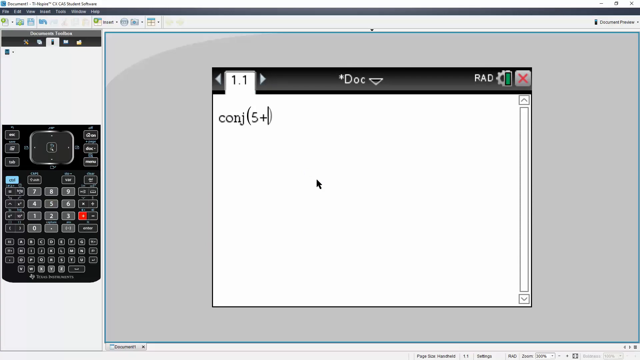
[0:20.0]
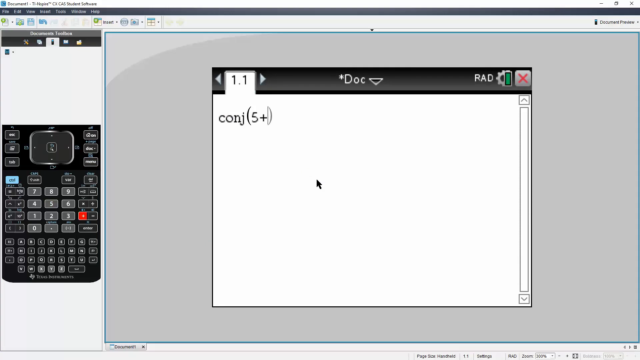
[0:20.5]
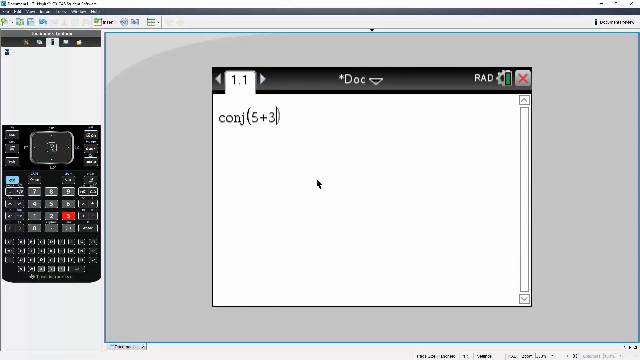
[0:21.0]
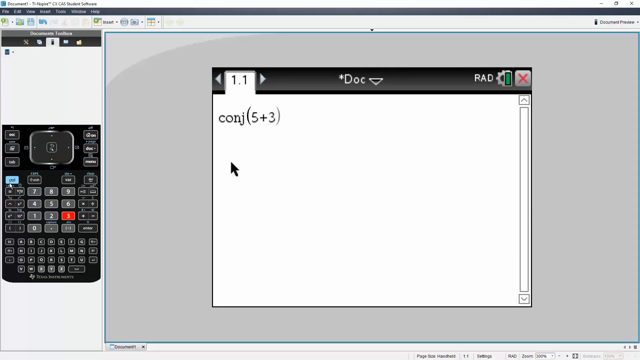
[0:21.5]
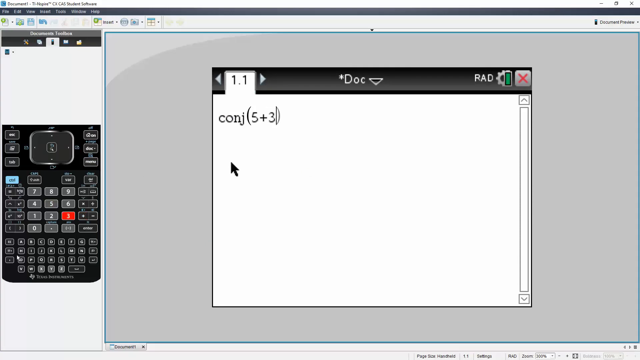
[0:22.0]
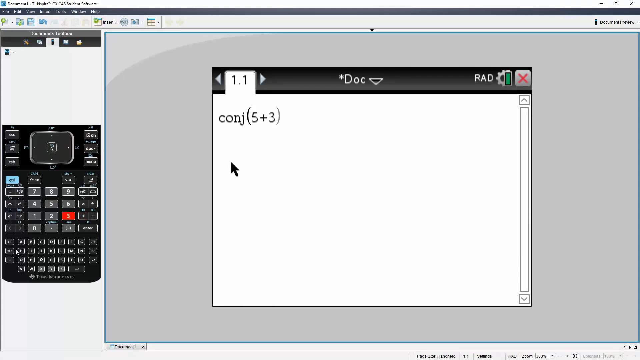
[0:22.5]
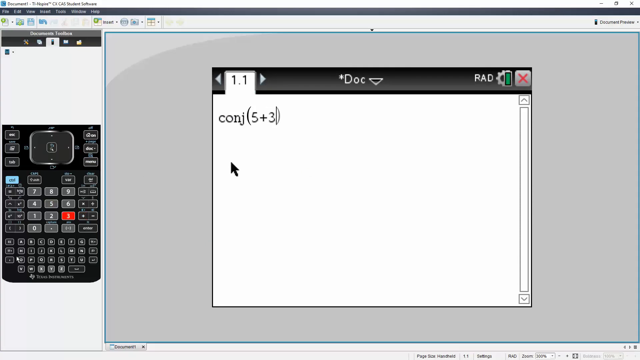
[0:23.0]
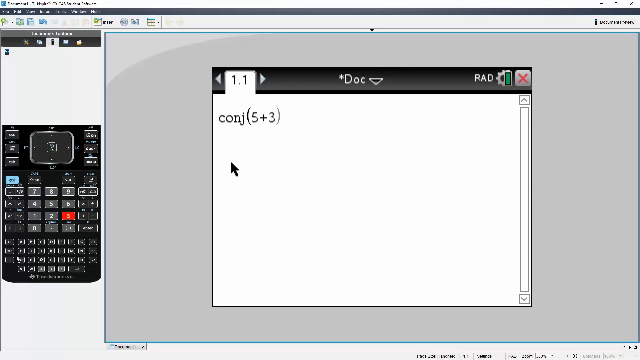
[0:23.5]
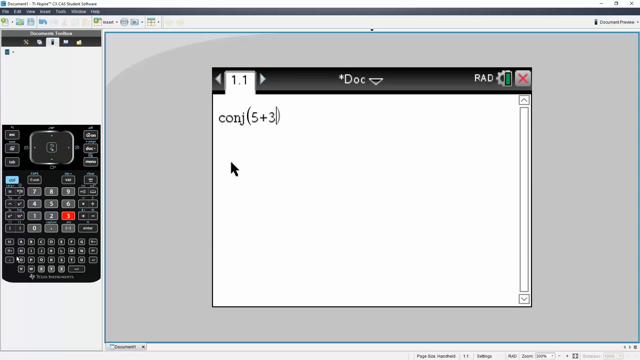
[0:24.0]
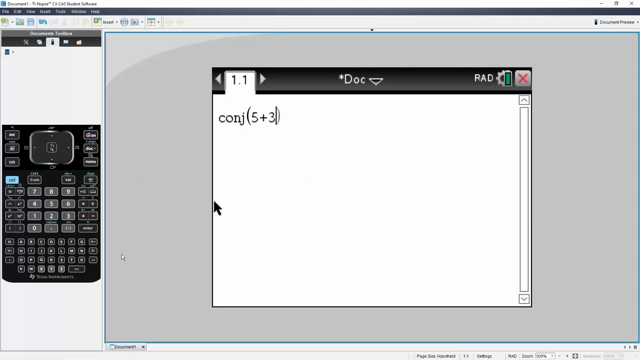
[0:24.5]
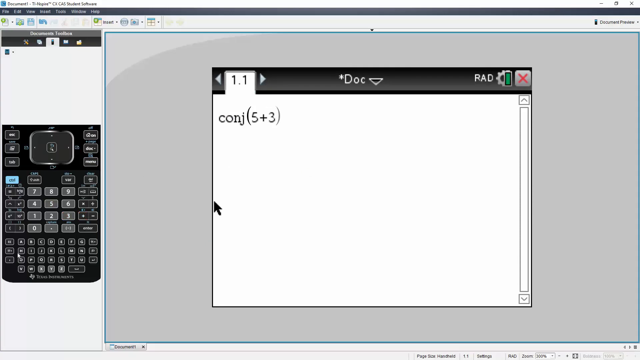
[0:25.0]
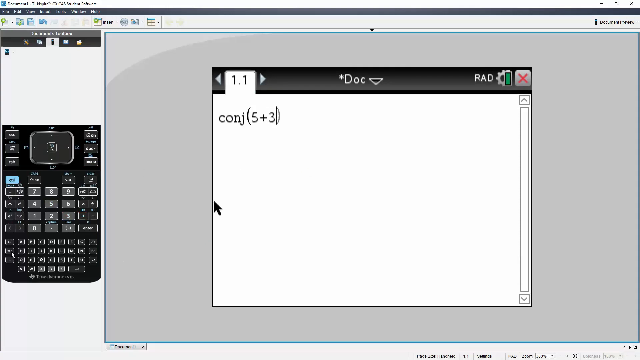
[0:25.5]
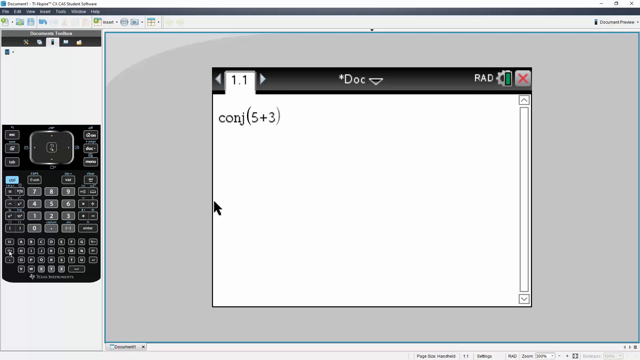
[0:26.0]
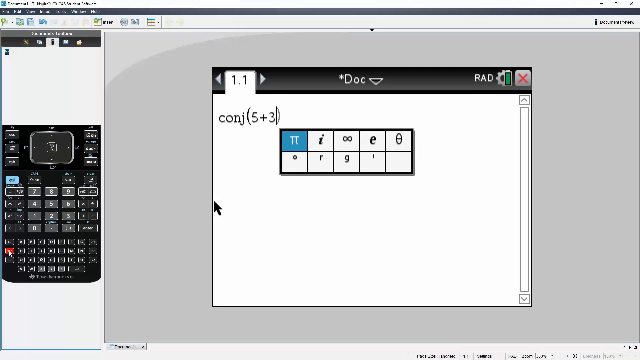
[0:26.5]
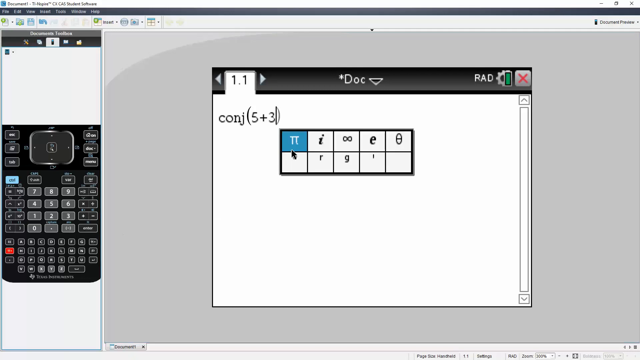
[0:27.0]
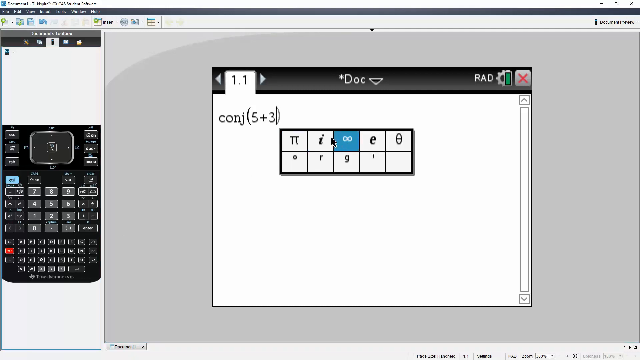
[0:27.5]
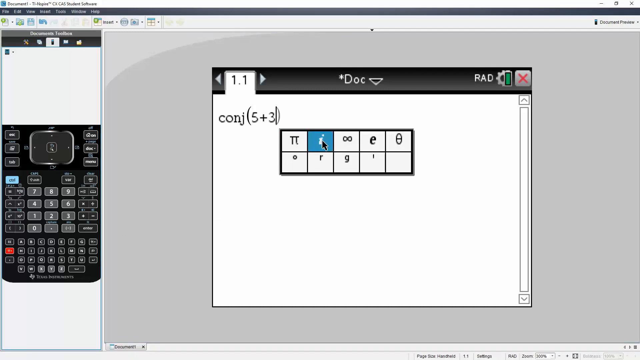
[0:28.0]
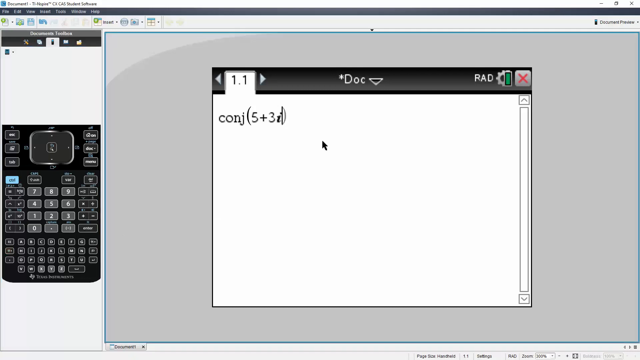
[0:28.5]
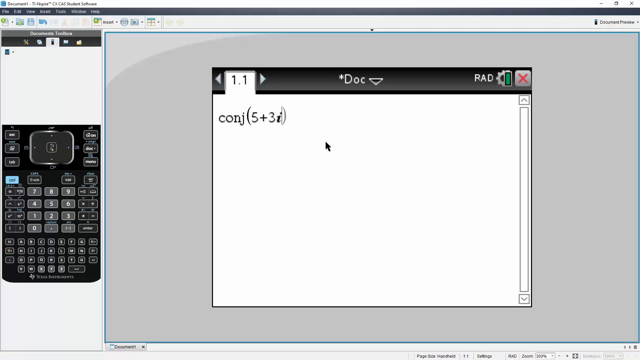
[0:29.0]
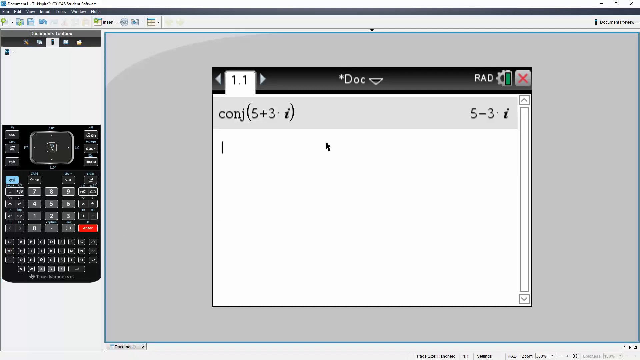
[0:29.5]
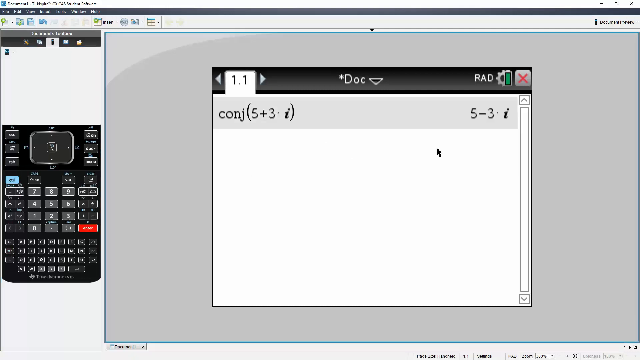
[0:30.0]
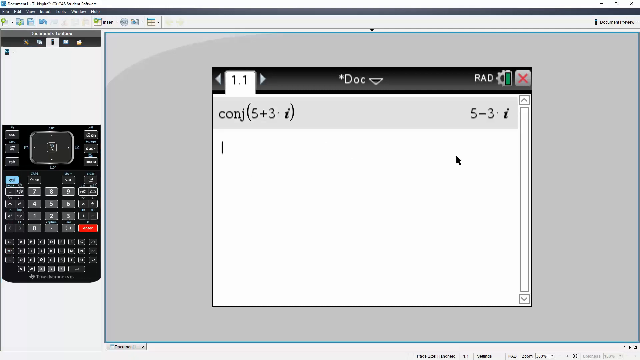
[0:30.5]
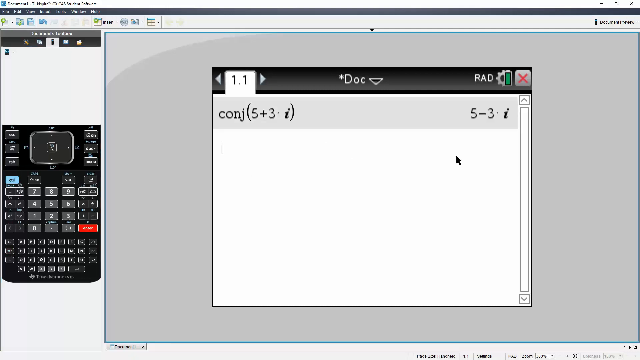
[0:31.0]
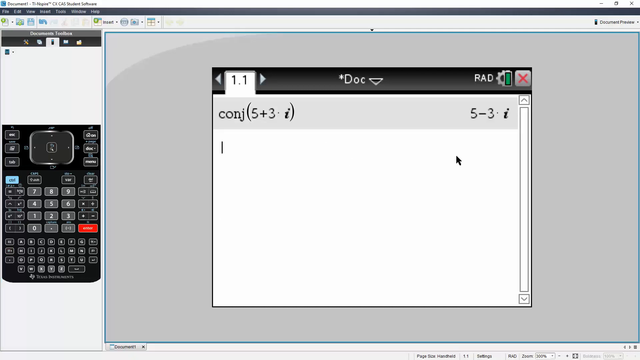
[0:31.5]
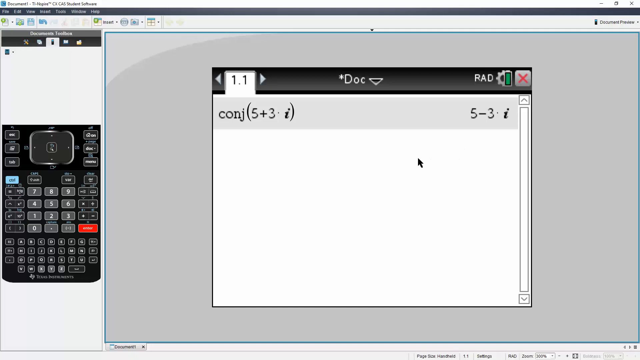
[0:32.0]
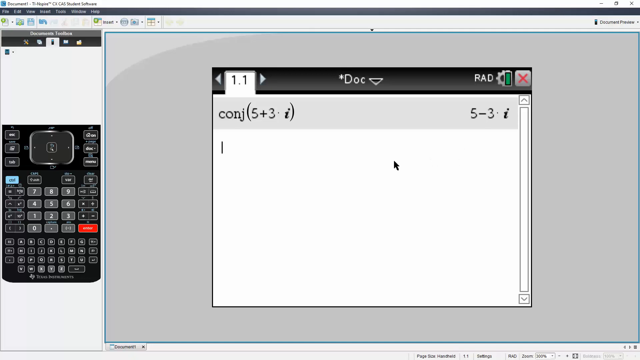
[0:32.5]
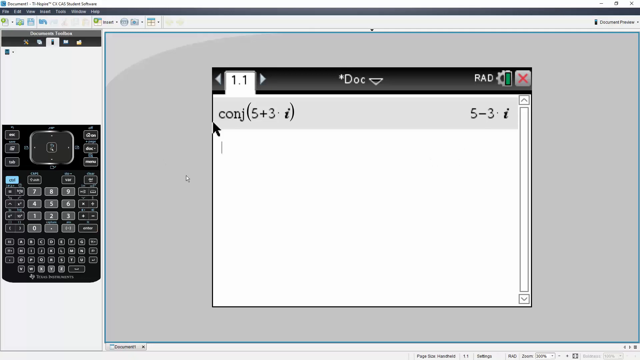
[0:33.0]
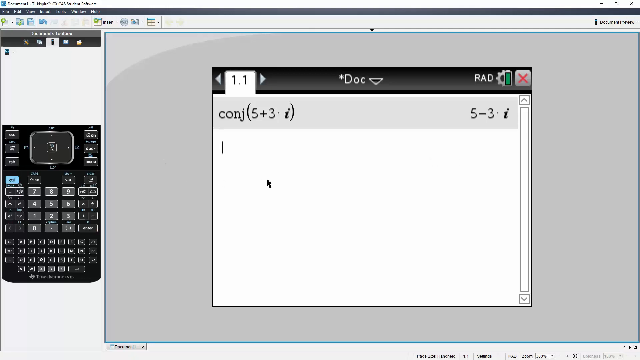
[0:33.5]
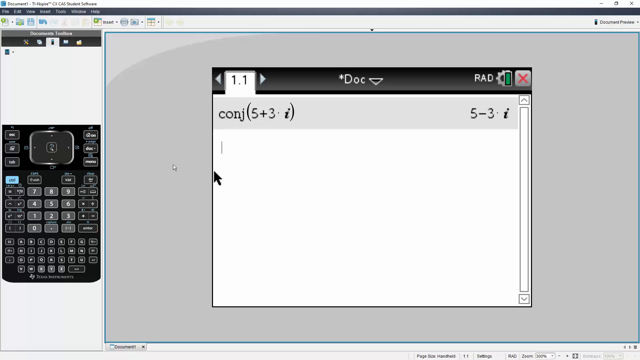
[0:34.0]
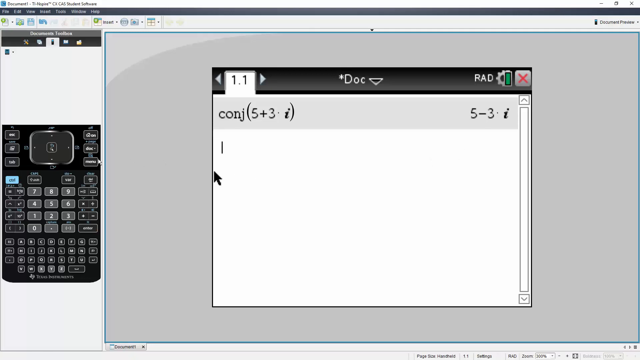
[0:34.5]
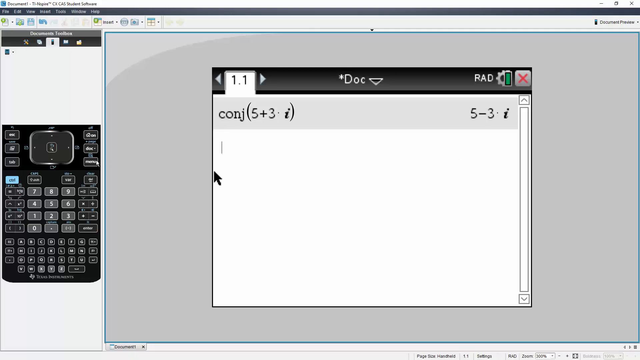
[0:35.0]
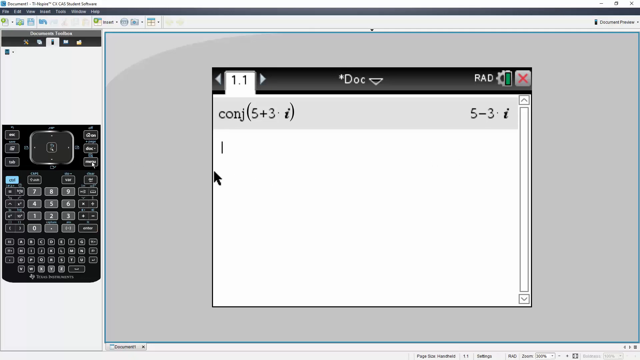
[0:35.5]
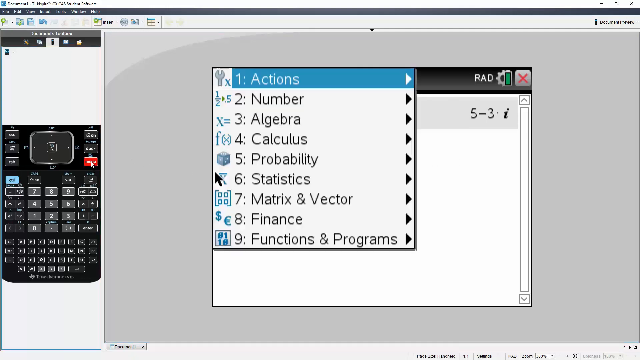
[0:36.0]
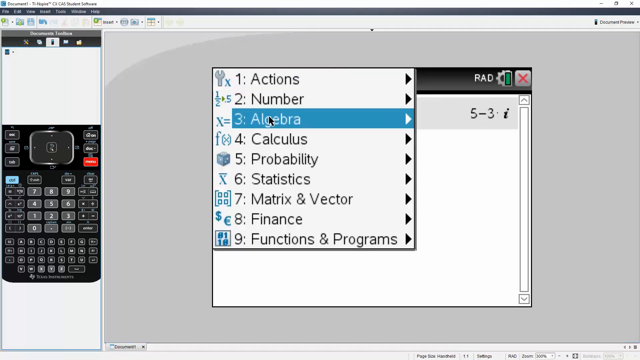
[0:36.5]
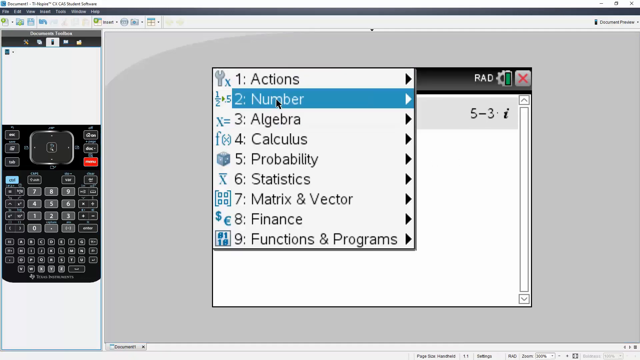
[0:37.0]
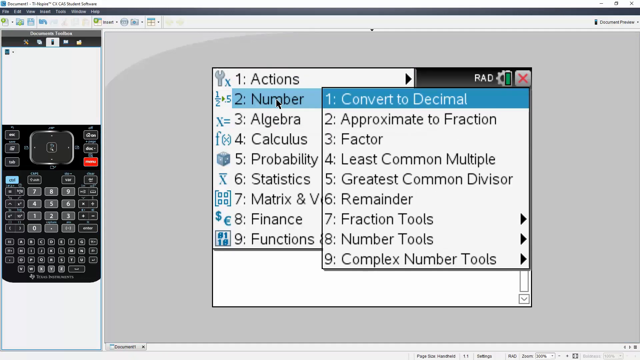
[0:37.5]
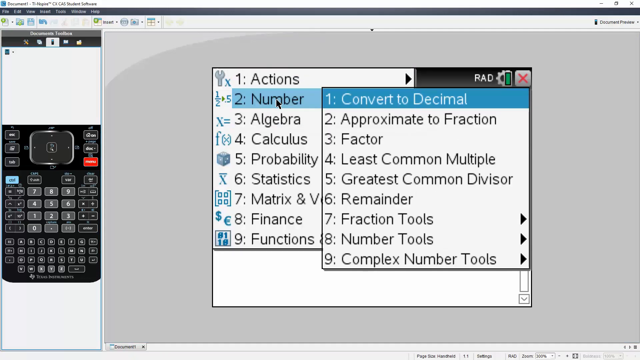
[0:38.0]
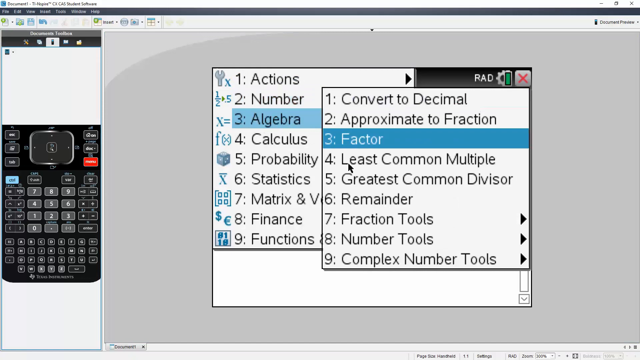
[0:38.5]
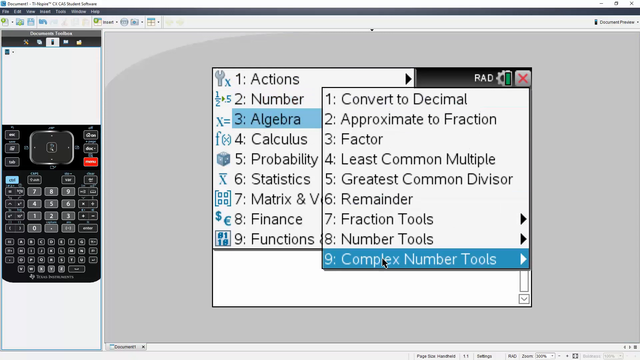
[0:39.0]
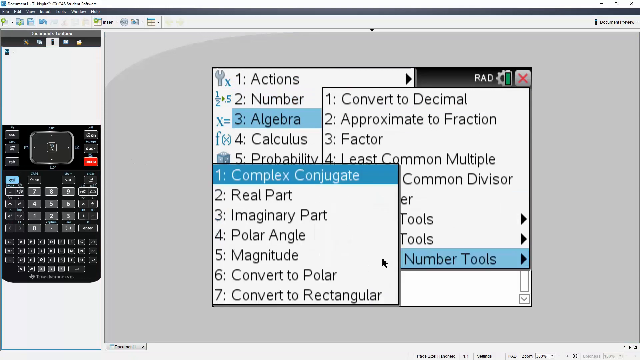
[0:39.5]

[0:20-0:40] The conjugate screen is on the right, and the person uses the calculator on the left with the mouse pointer, pressing buttons on it. Each time a button is pressed, a menu shows up in the middle of the screen. It is some type of mathematical software program: the calculator face is on the left, and the math problem typed into the calculator appears on the right inside a document titled "Doc." A conjugate, 5 plus 3, has been entered. The mouse pointer goes over to the calculator and clicks another button; the buttons are too small to identify. This opens a menu in front of the document, and the selection places that symbol inside the conjugate line of the math problem. Next, another button on the calculator is clicked, bringing up menus that open different flyout menus.